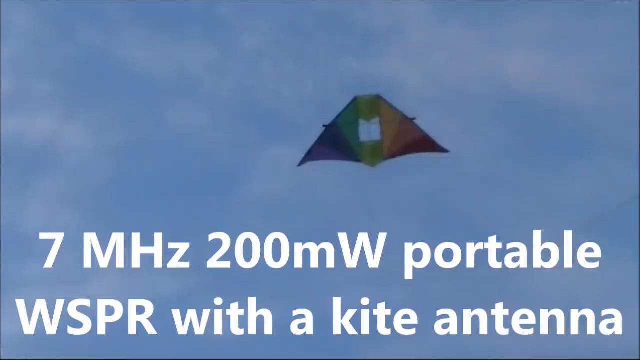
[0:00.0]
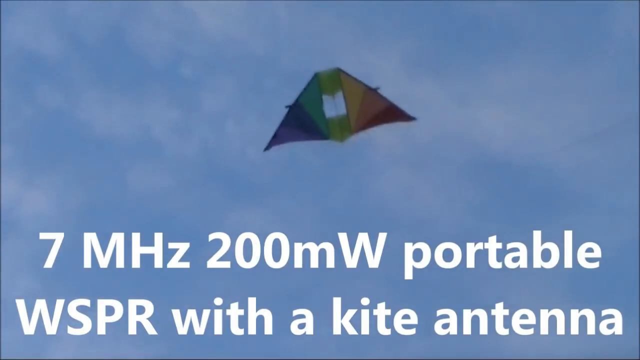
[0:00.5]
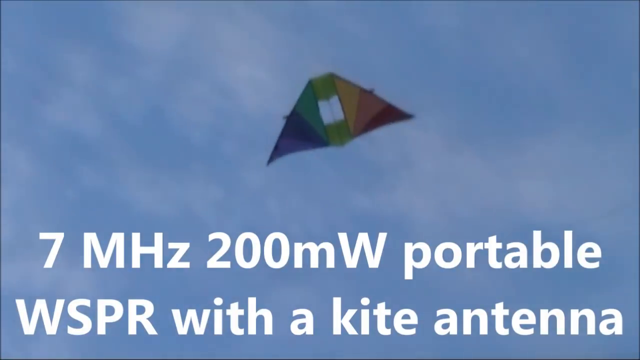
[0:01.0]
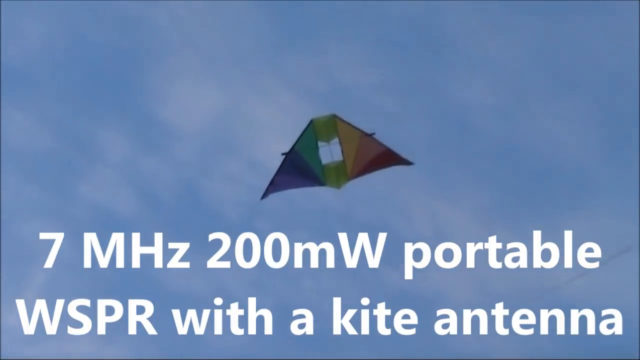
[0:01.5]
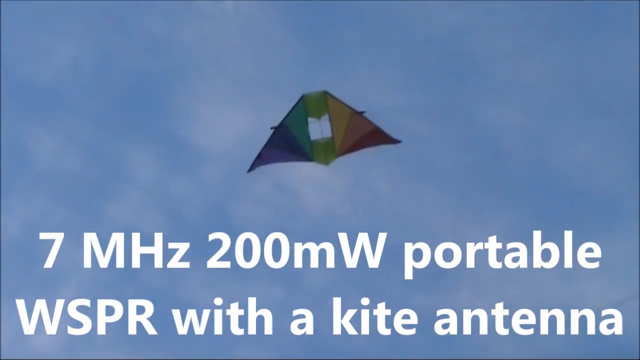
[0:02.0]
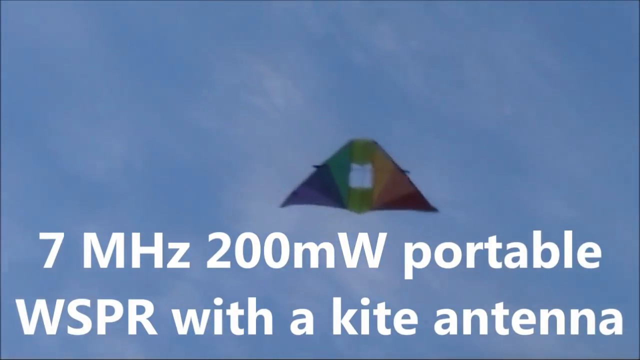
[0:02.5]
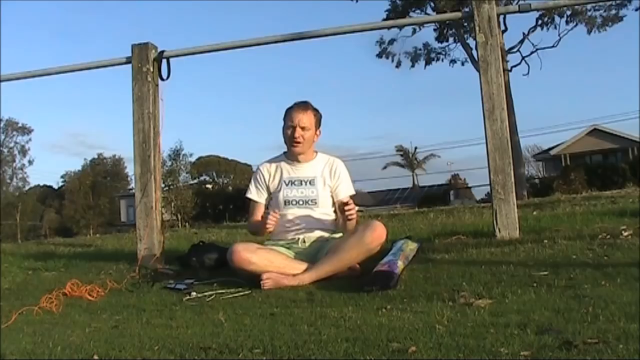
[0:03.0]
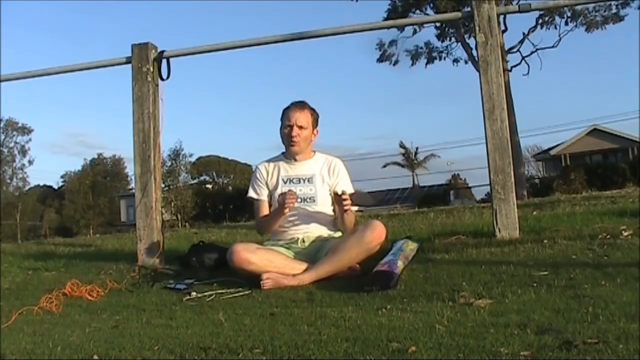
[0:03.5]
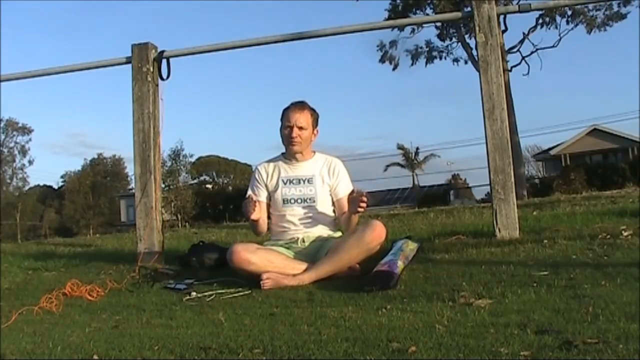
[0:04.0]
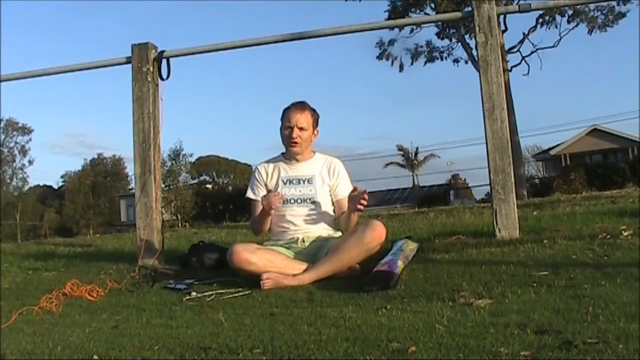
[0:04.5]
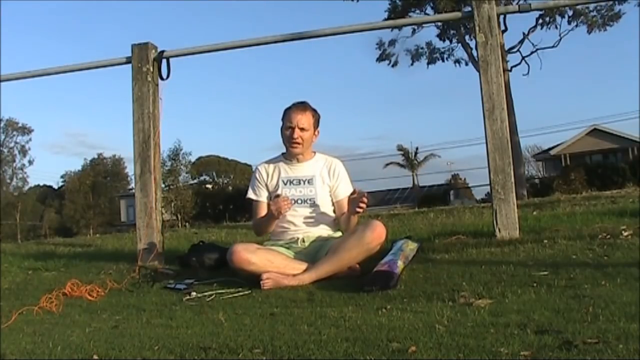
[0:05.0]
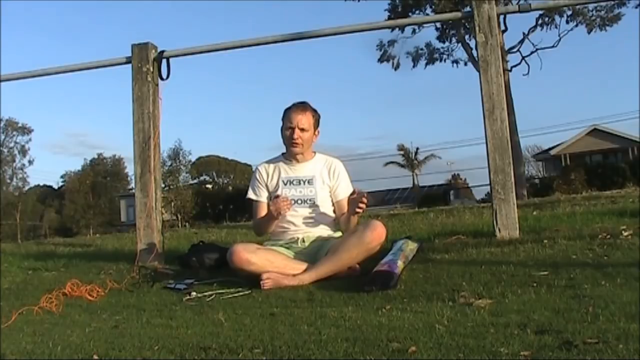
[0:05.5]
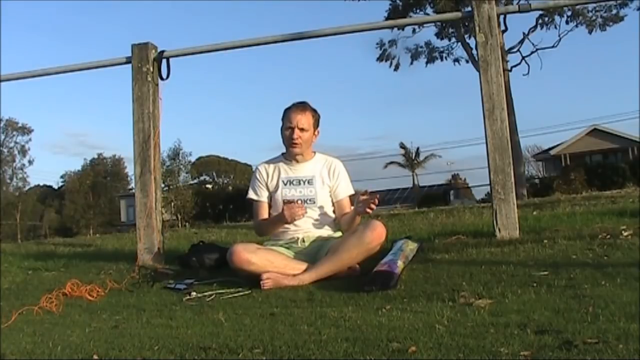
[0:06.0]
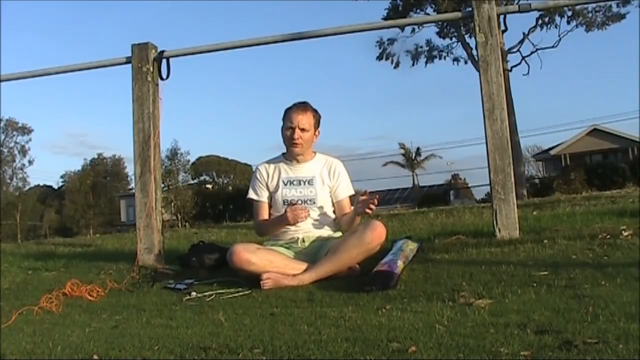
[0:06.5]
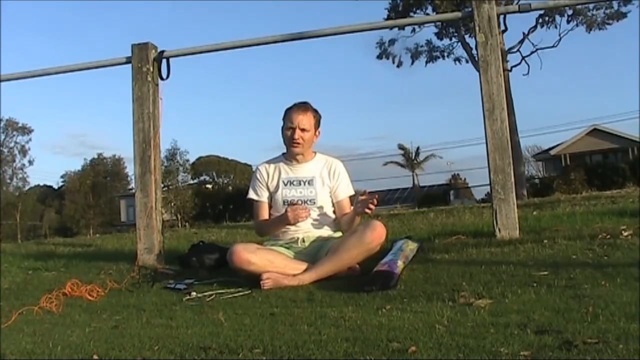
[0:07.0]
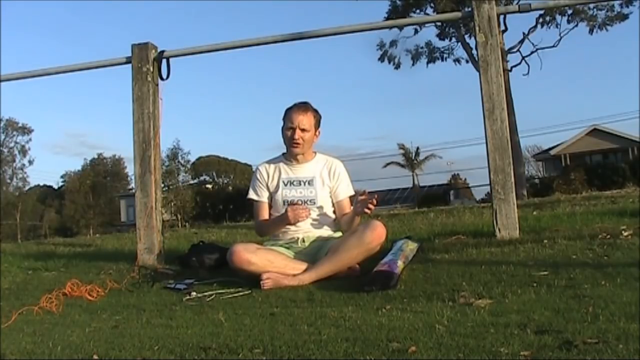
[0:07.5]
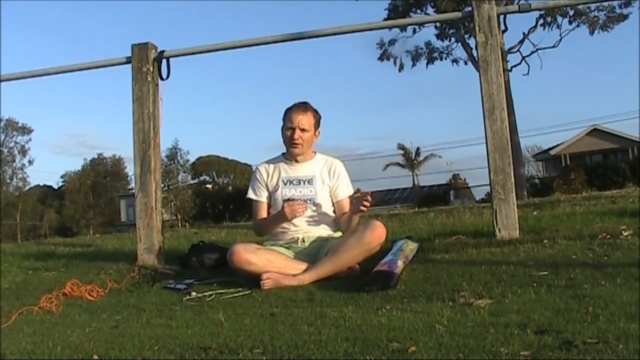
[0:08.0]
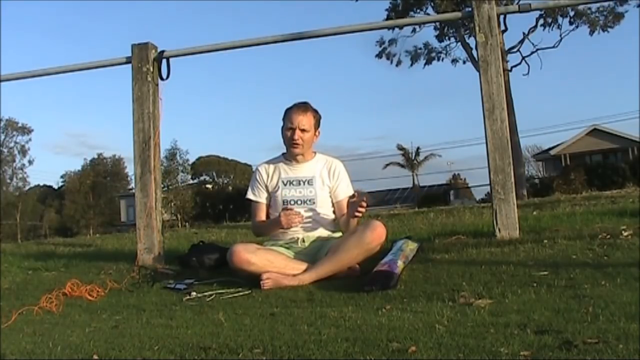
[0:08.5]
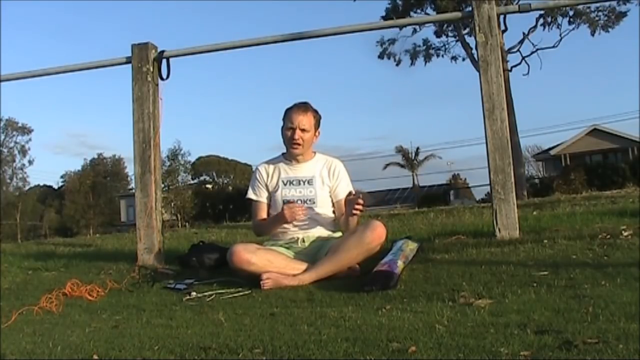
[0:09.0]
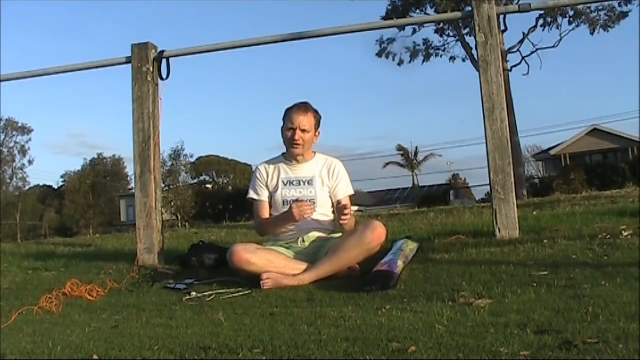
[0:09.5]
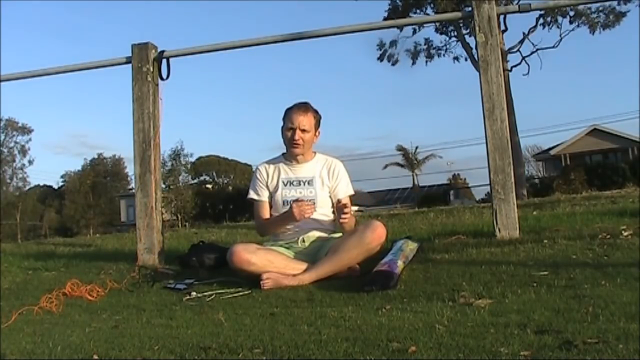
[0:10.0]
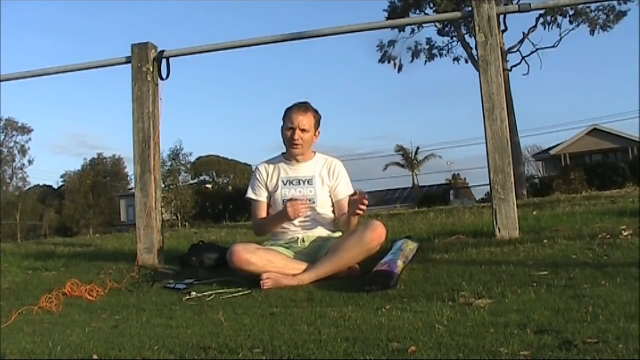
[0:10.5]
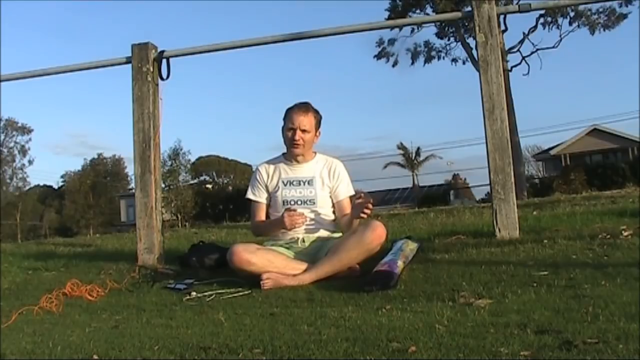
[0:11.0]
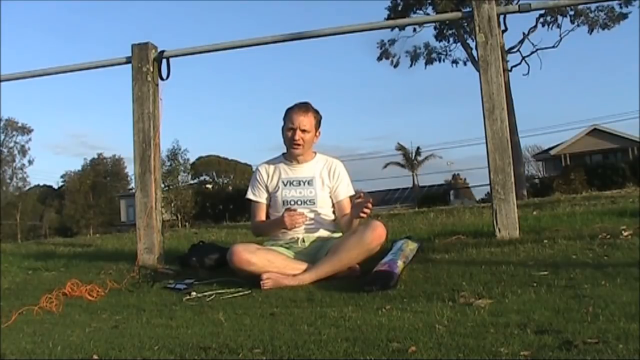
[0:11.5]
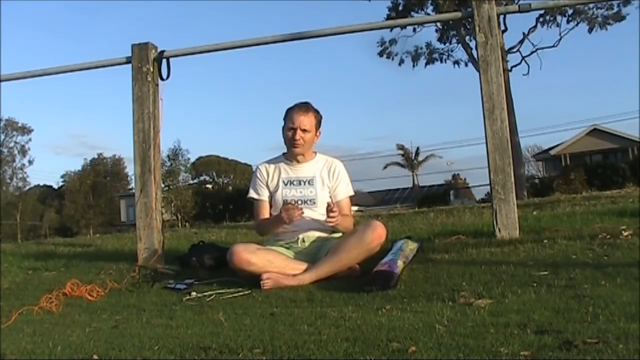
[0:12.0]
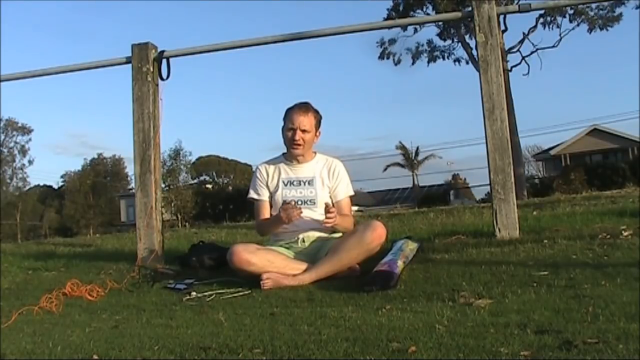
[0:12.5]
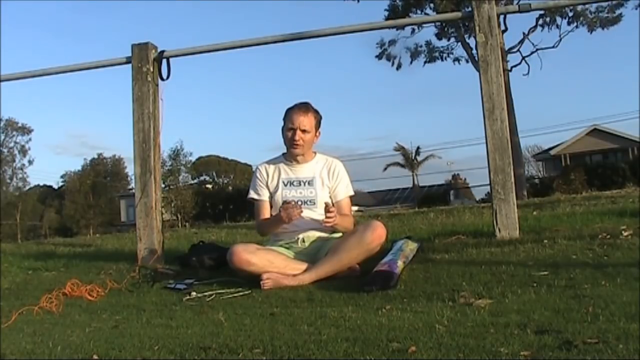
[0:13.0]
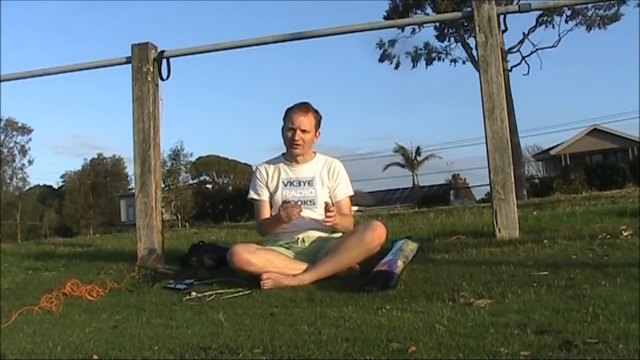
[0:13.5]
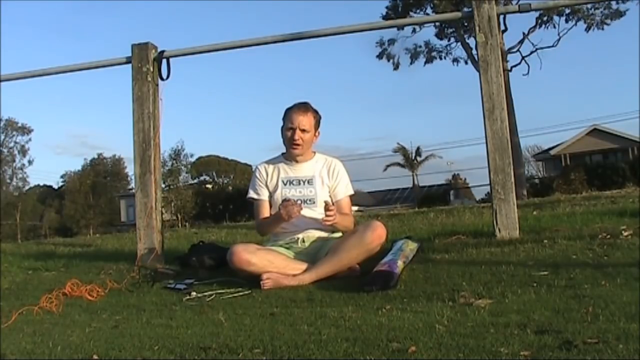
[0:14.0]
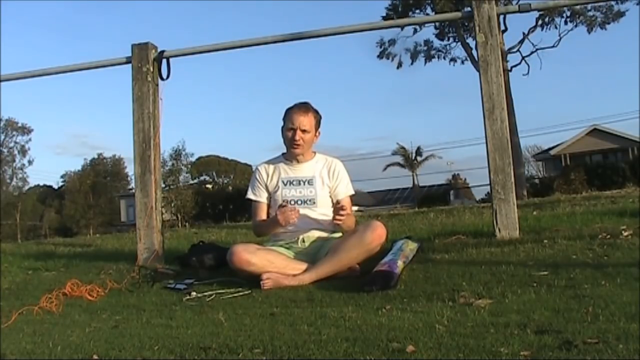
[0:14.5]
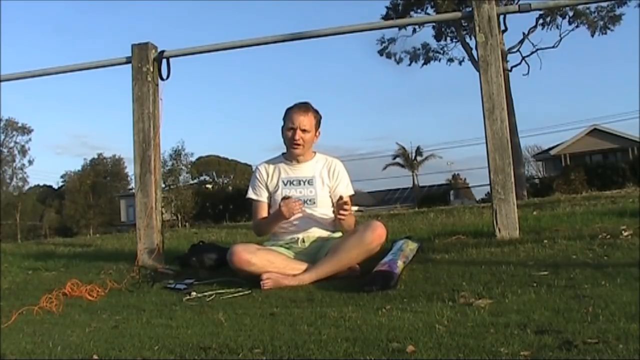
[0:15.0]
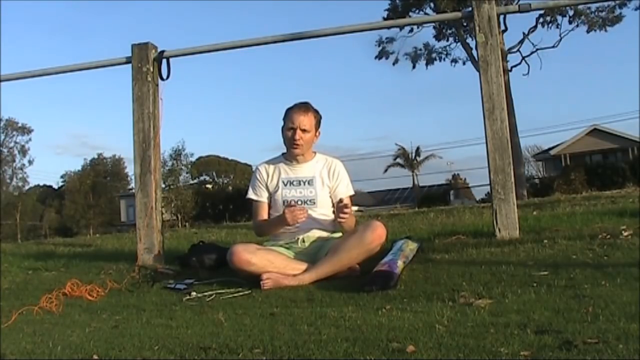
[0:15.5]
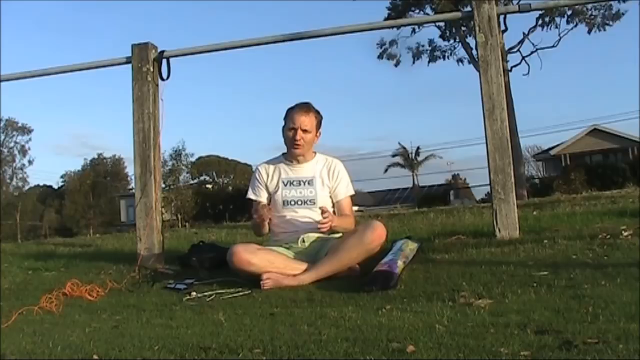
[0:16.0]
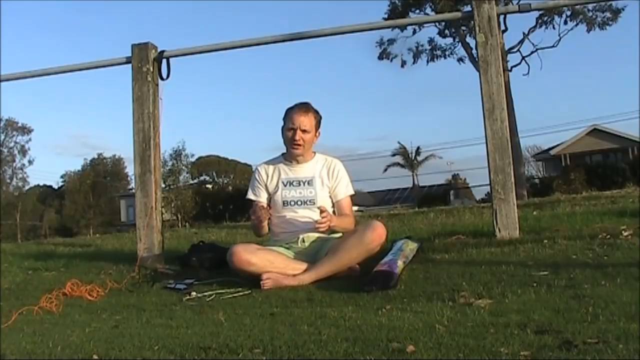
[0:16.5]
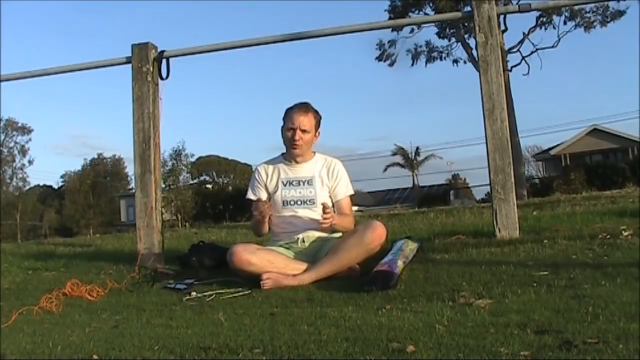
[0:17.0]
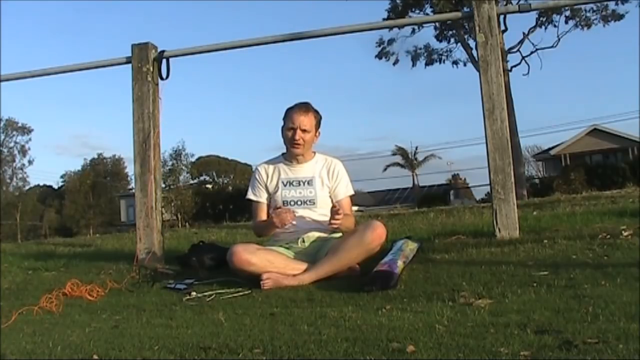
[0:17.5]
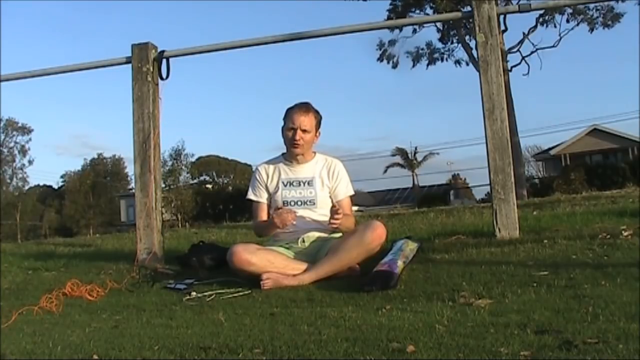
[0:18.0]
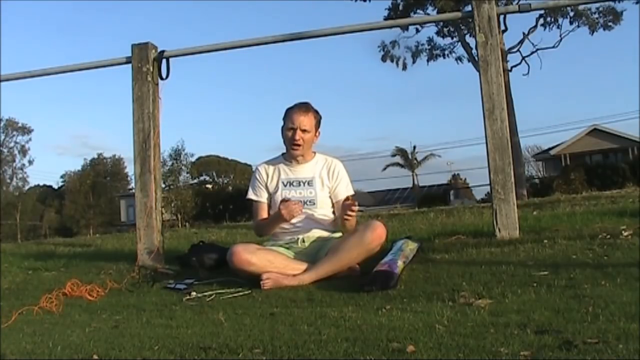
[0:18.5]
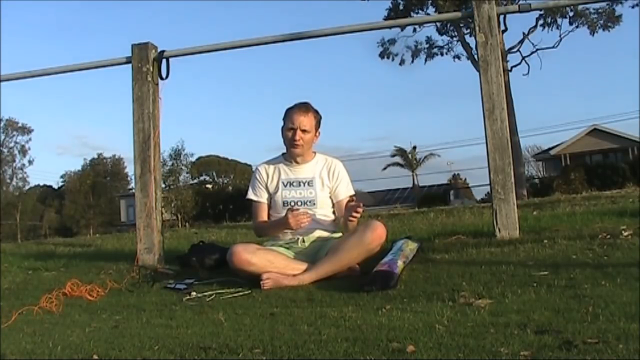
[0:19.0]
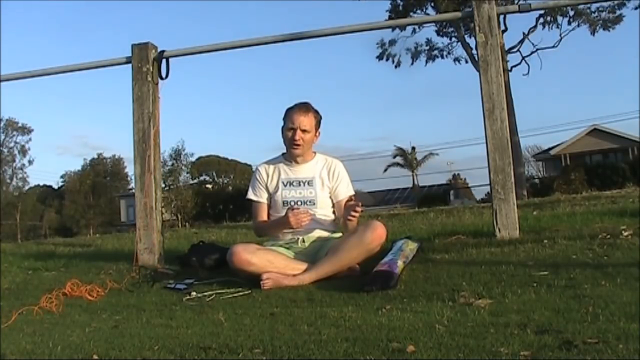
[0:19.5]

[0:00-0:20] A kite flies in the sky. It is a triangular rainbow kite, with colours from the bottom including blue, green, yellow, orange and red. Text at the bottom reads "7 megahertz, 200 milliwatts, portable WSPR with a kite antenna." The kite is shown flying, then the video cuts to a white man sitting on the grass in front of a fence, in a place that does not seem to be America and might be Australia. Palm trees, steel roofs, houses and trees are in the background. Next to him on the grass are some orange line, like kite line, some other strings, and a container that maybe holds something like the kite. He talks with his hands and wears a white shirt that says something like "BC3Y radio books."